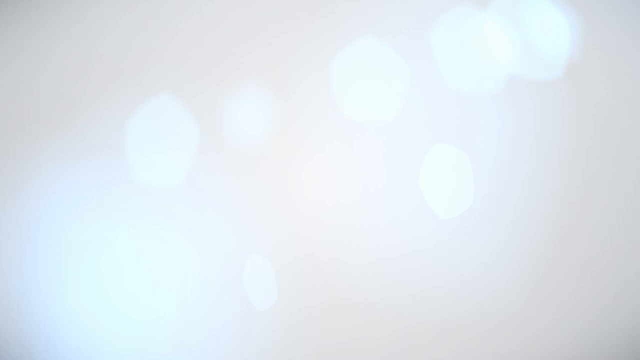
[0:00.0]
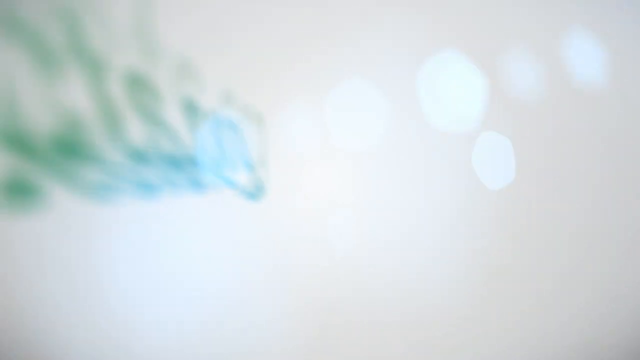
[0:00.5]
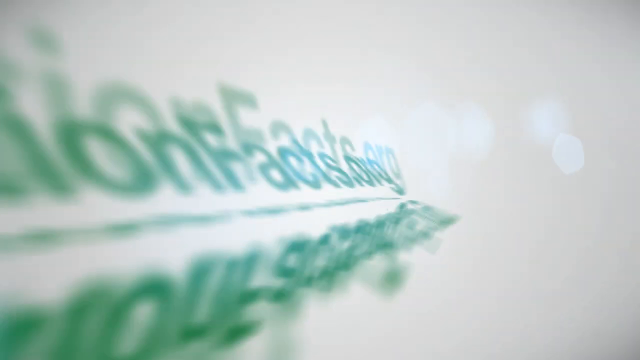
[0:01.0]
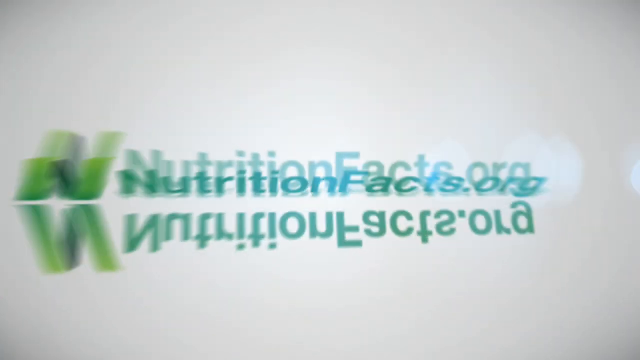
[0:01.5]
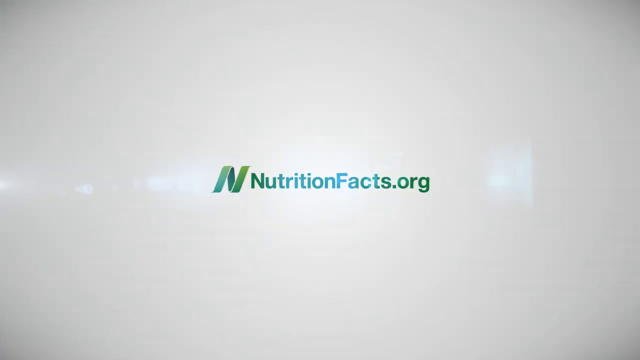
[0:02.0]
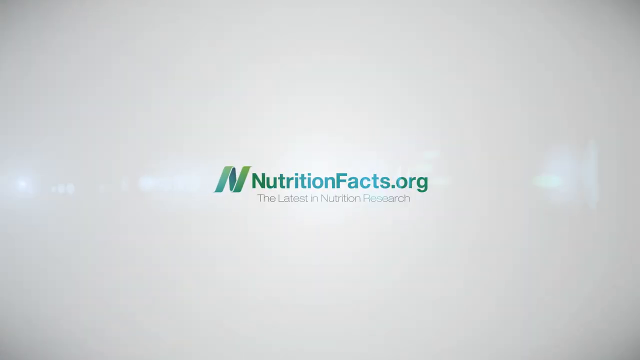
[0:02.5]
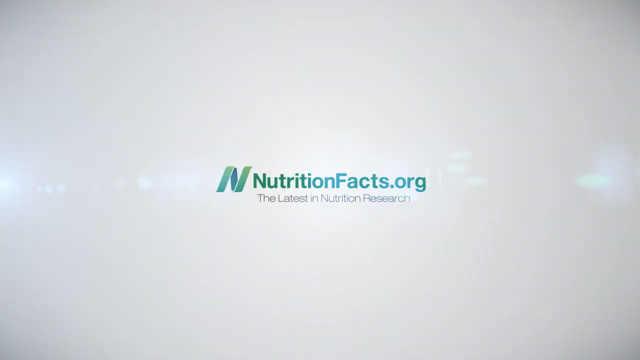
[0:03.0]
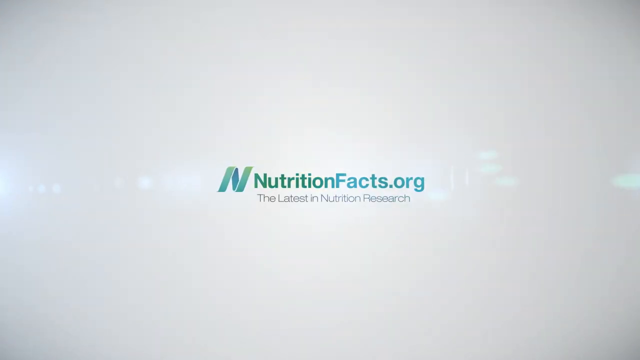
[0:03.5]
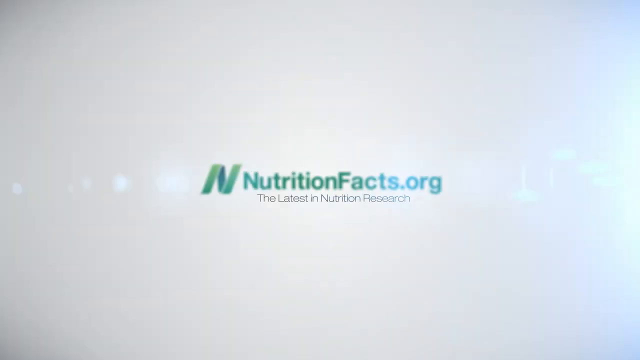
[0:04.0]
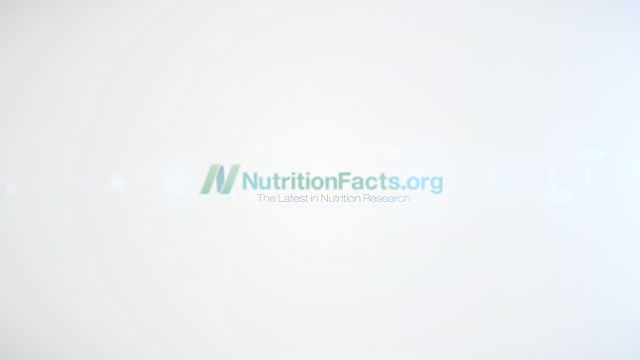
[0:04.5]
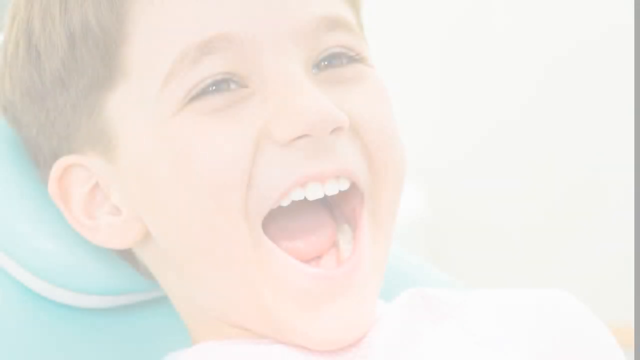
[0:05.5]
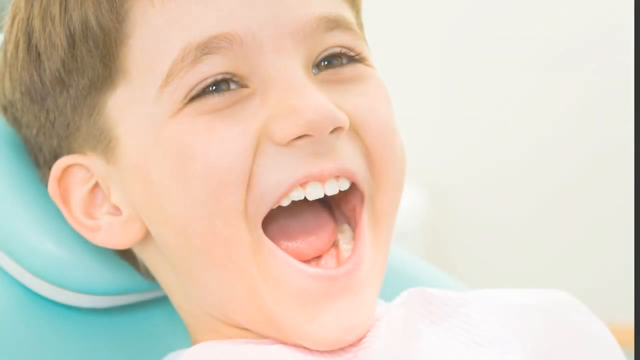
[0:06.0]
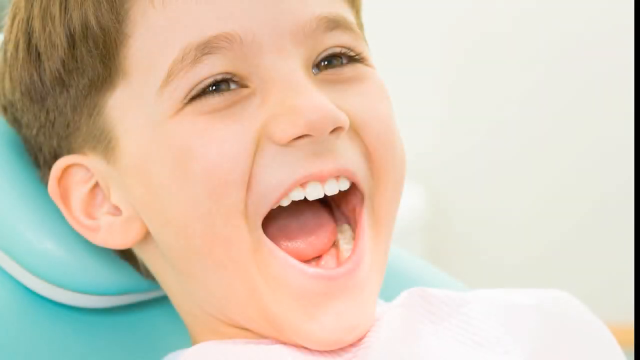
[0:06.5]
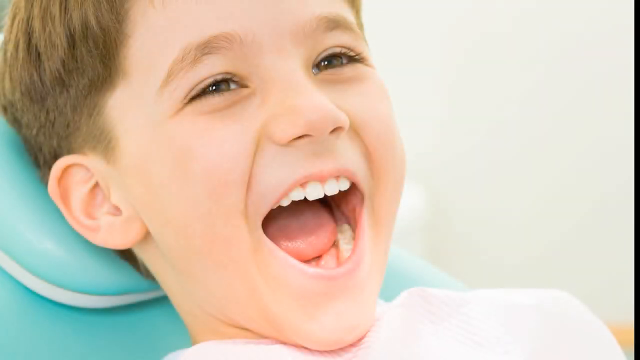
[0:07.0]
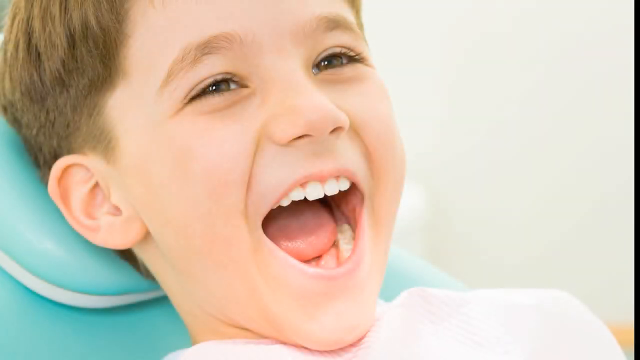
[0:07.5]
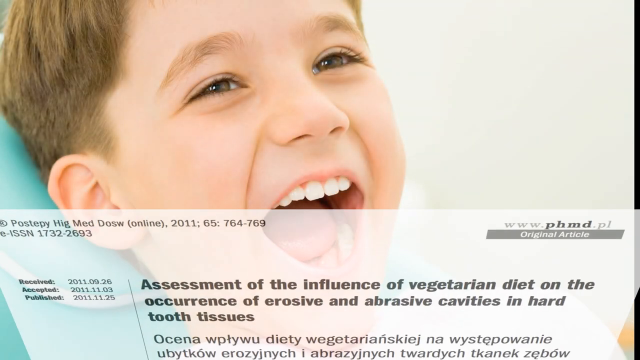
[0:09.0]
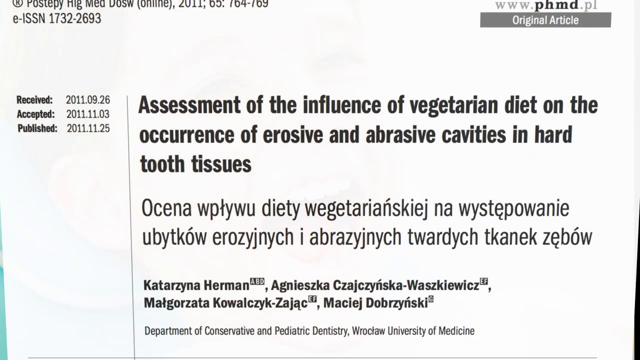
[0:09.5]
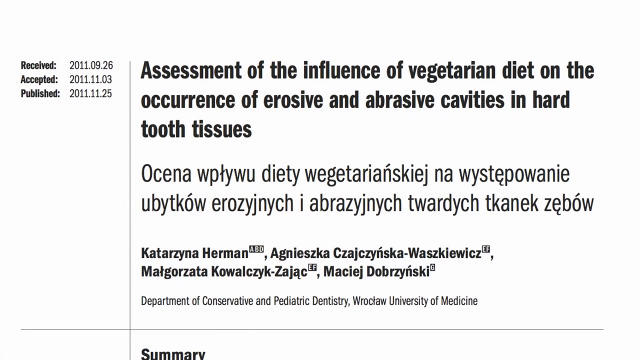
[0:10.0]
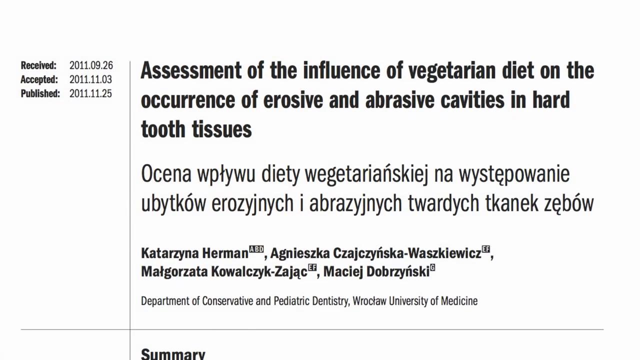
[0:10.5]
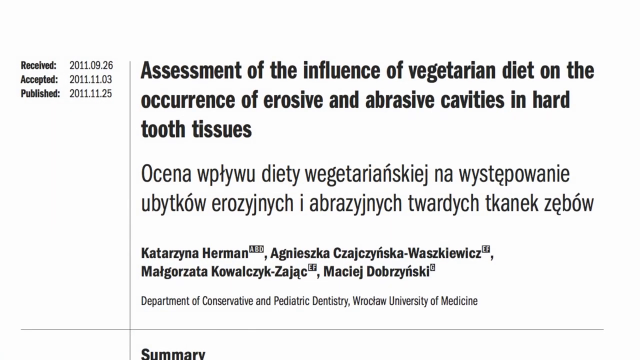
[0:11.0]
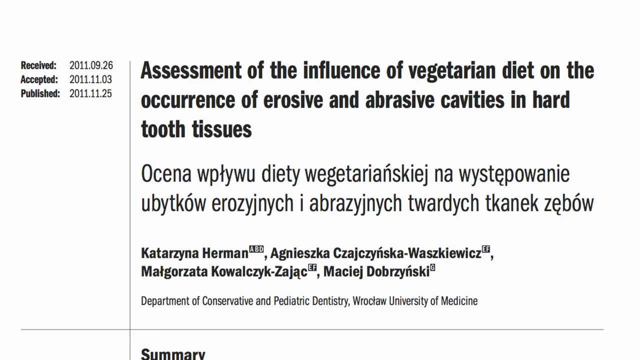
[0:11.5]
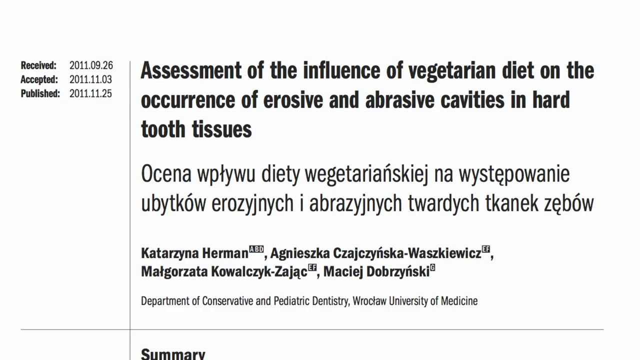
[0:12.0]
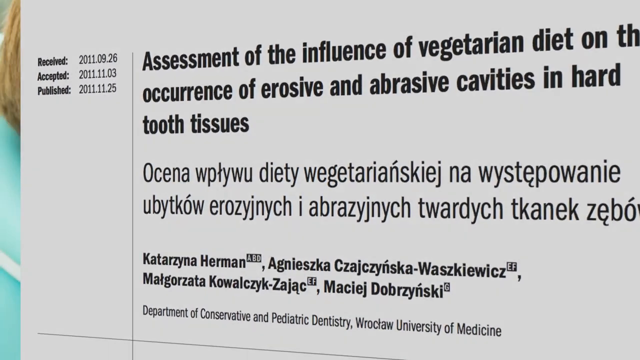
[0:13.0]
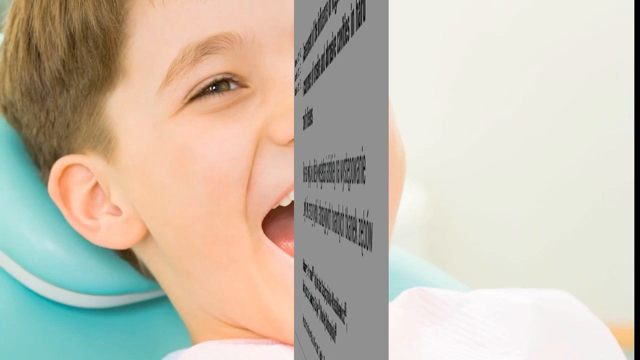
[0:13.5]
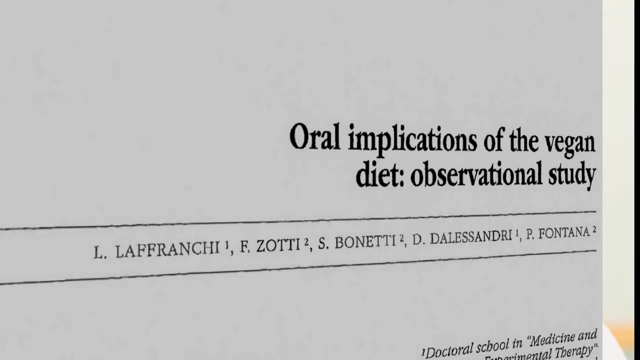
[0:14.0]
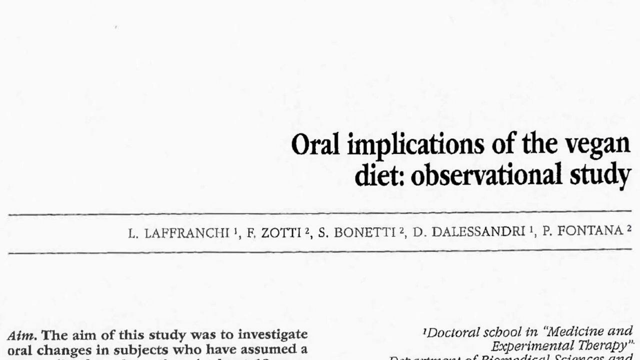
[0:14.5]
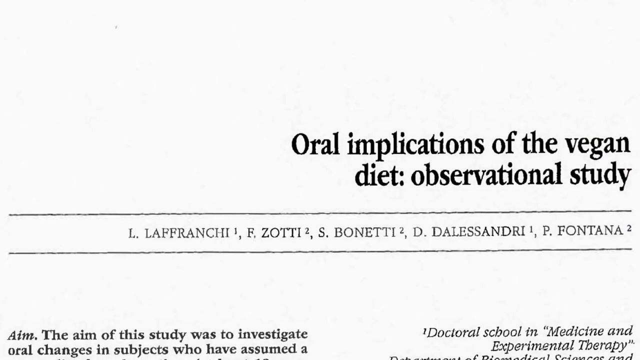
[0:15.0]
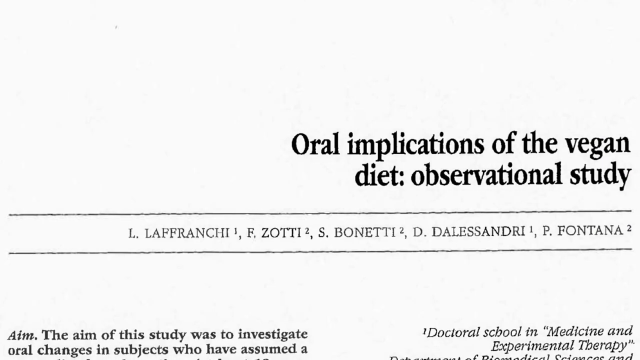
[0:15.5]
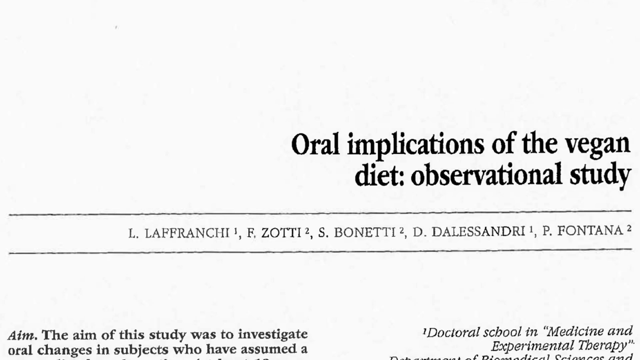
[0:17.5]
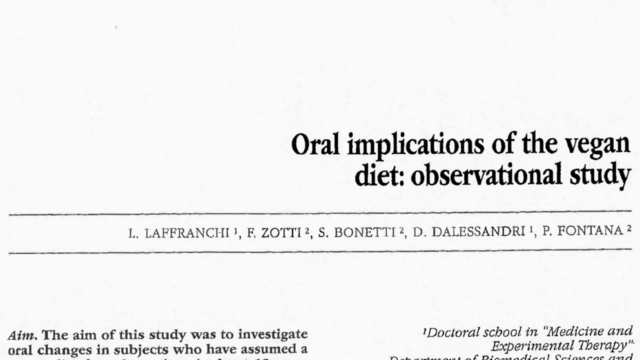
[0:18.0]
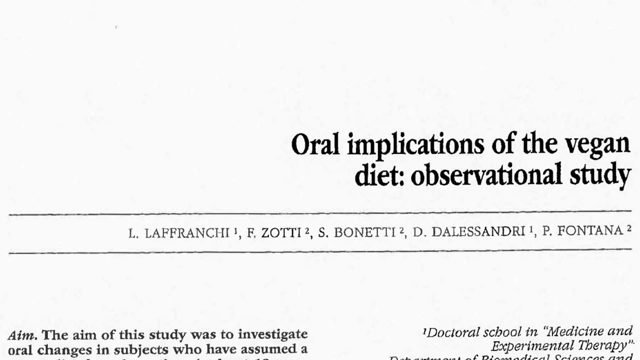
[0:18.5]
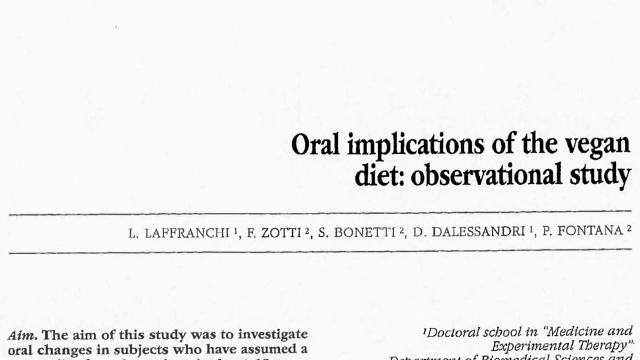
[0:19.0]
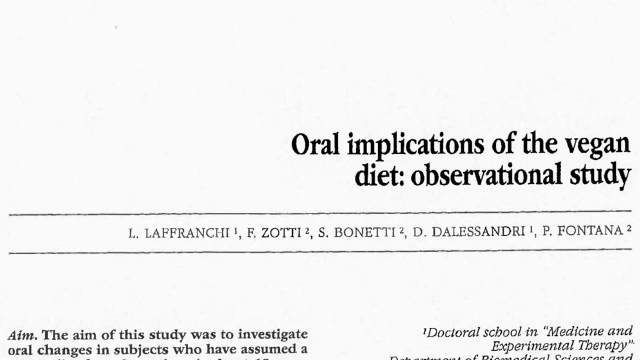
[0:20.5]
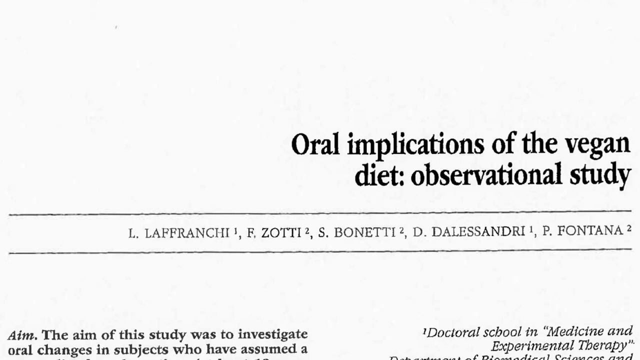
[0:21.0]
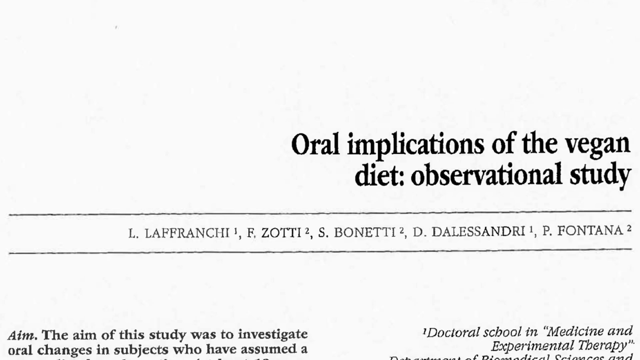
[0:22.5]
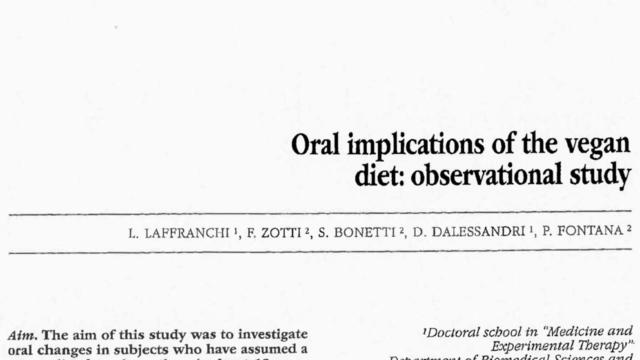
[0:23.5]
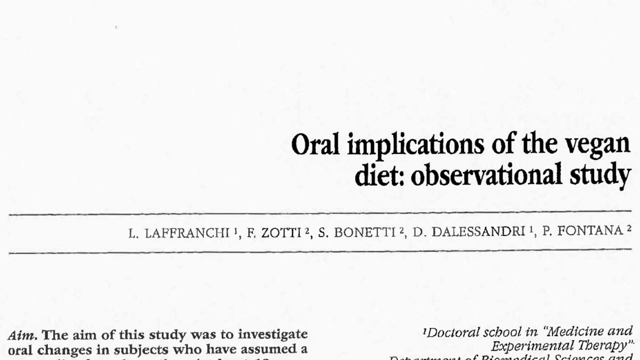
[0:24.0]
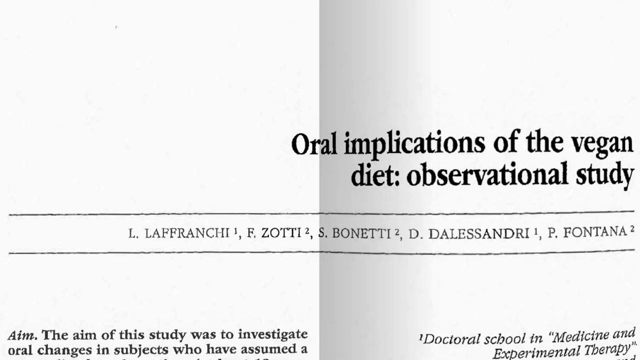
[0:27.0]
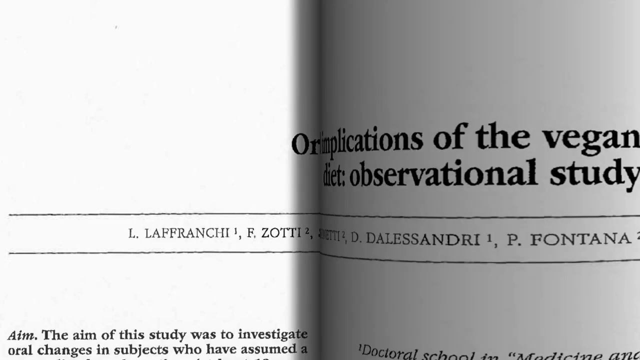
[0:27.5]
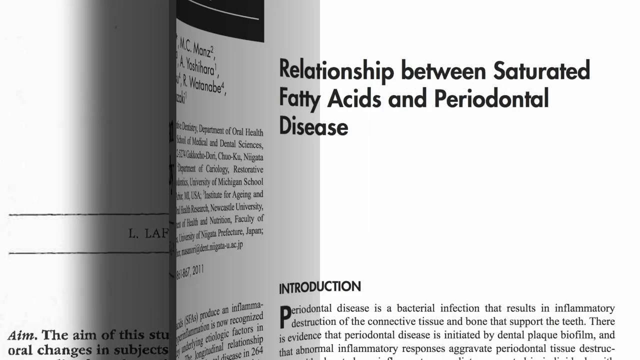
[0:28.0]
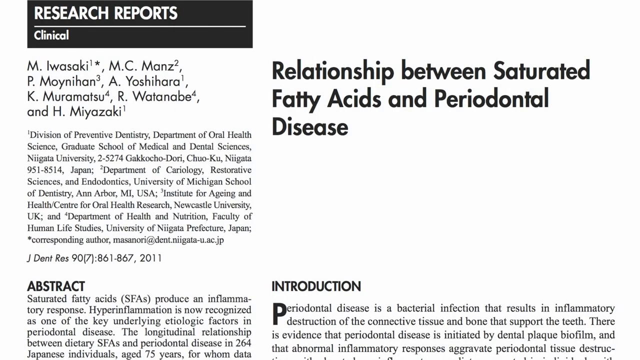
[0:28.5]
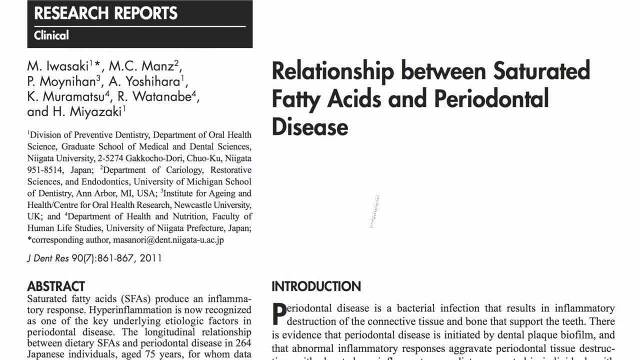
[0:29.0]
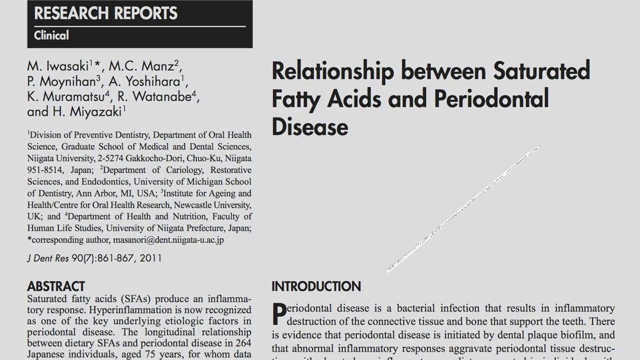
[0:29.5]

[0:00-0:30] The video opens with an animated introduction to nutritionfacts.org, a website. Text comes in reading "latest nutrition show." Kids, kind of smiling and laughing, with brownish hair, are laying on something blue; this may be a dentistry office, and it almost looks like a dentistry chair. Writing then pops up, including "vegetarian diet" and "occurrence of erosive and abrasive cavities in hard tooth tissues," followed by what is probably the same thing in different languages. Another title reads "oral implications of the vegan diet observational study." The writing is black on a white background. Next, writing reads "relationship between saturated fatty acids and periodontal disease." Other text includes "oral health" and "dentistry," along with an introduction stating that periodontal disease is a bacterial infection, plus some other writing. The video then goes back to a faded screen with no words, just a kind of purple-white haze.